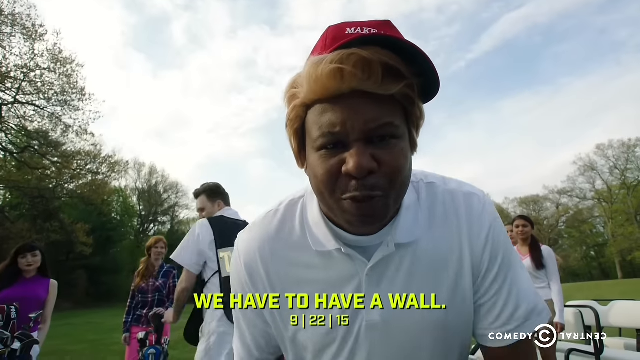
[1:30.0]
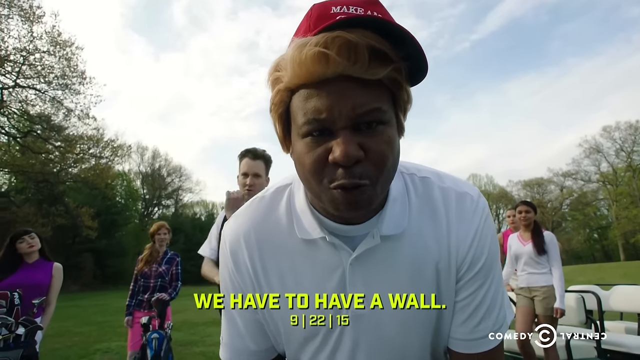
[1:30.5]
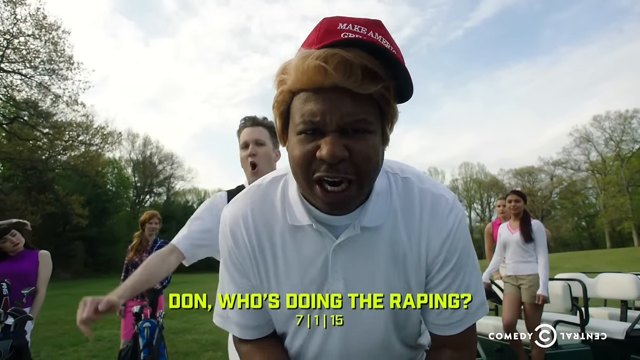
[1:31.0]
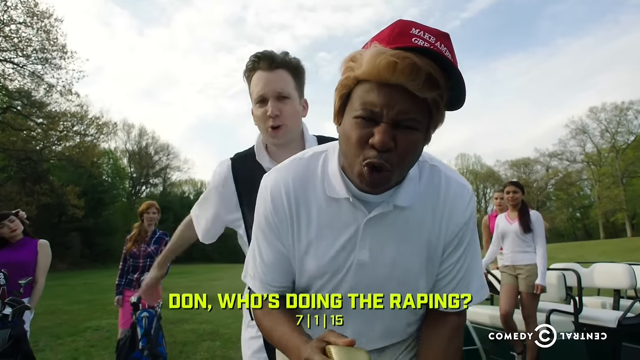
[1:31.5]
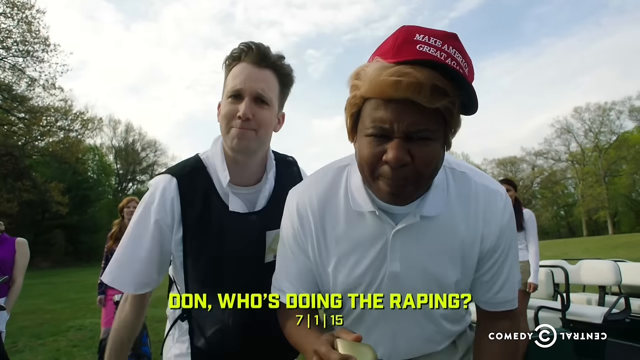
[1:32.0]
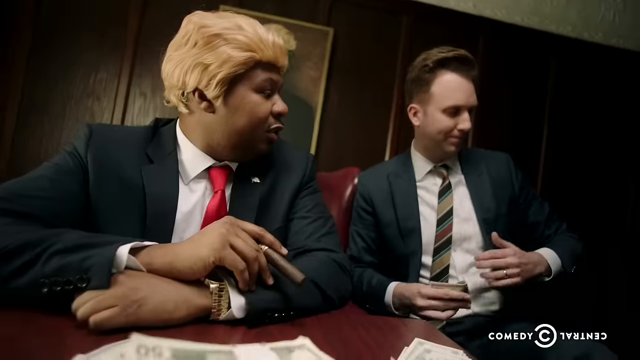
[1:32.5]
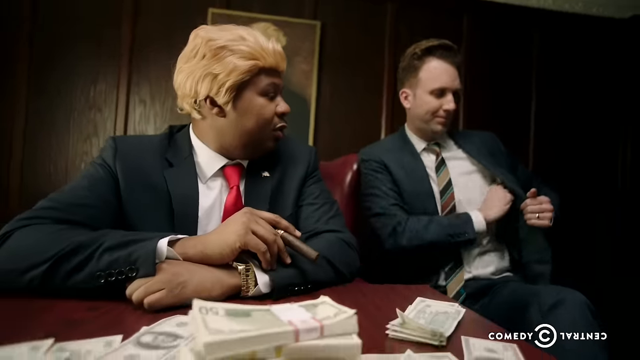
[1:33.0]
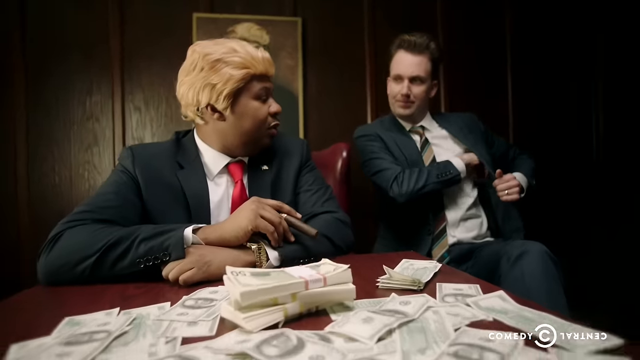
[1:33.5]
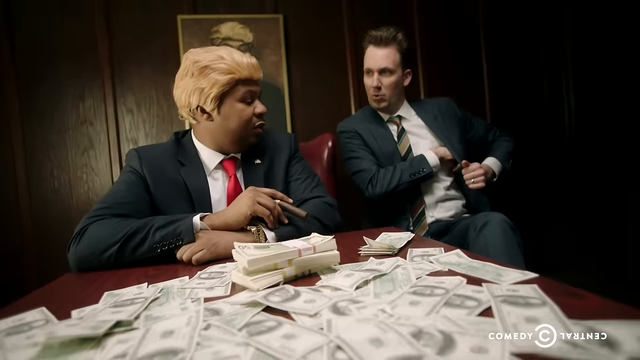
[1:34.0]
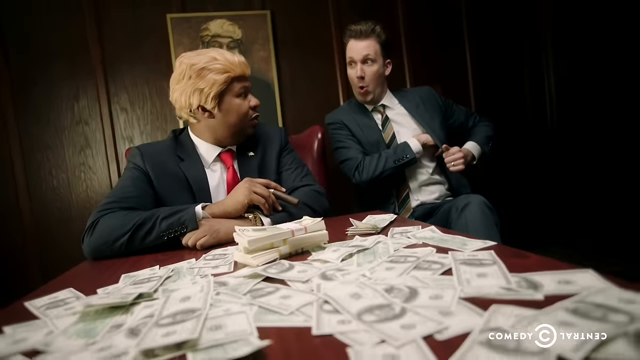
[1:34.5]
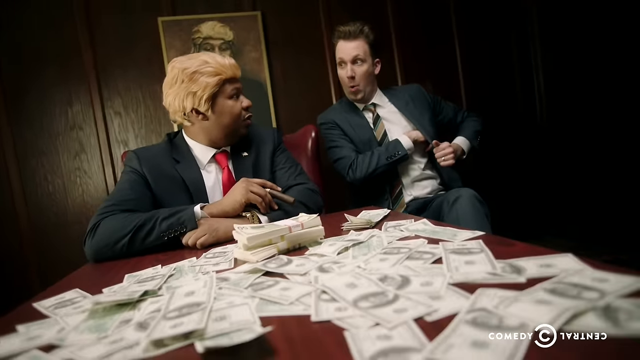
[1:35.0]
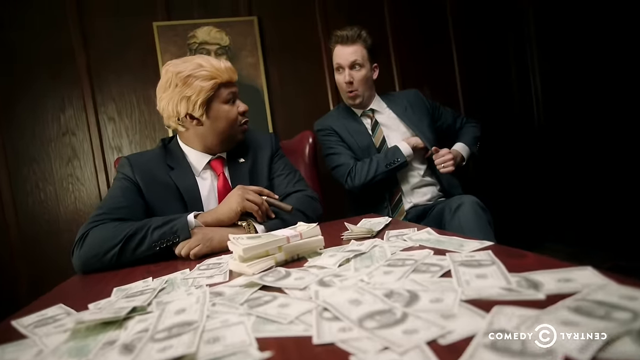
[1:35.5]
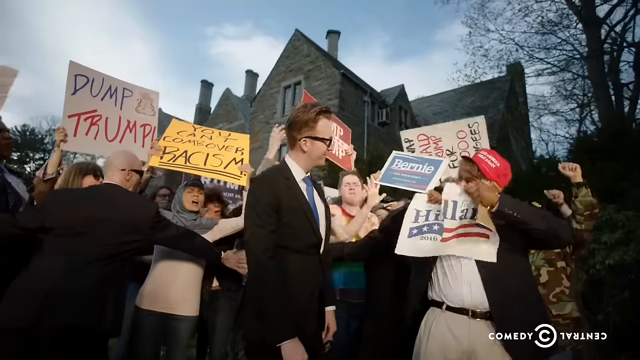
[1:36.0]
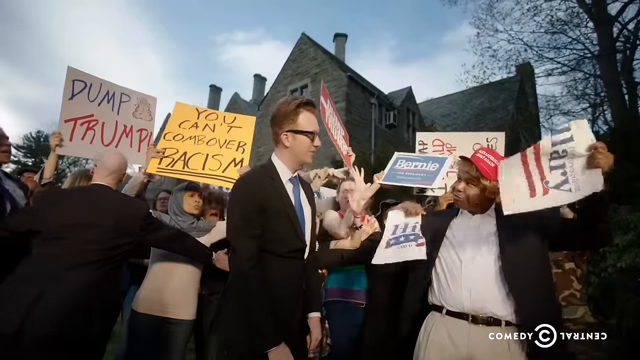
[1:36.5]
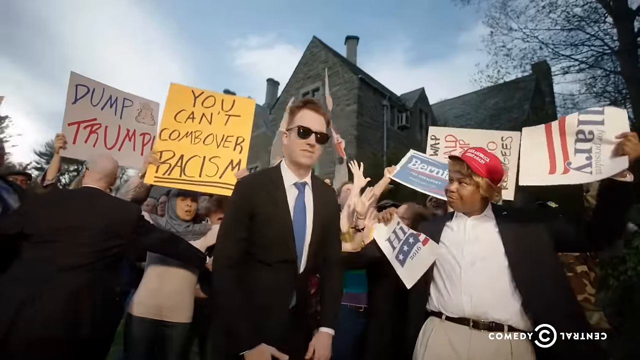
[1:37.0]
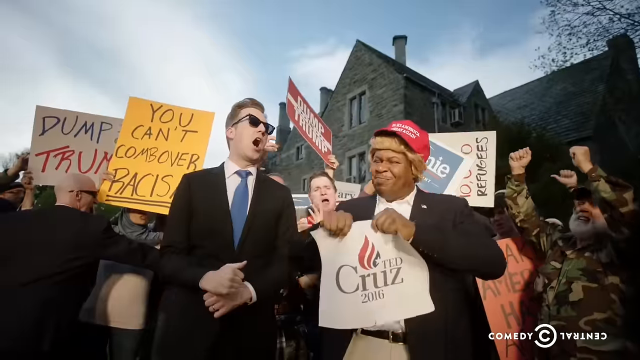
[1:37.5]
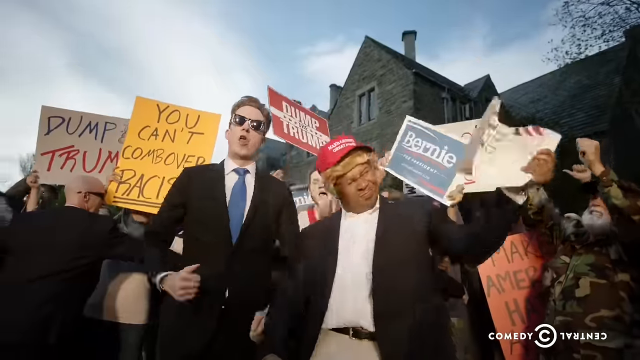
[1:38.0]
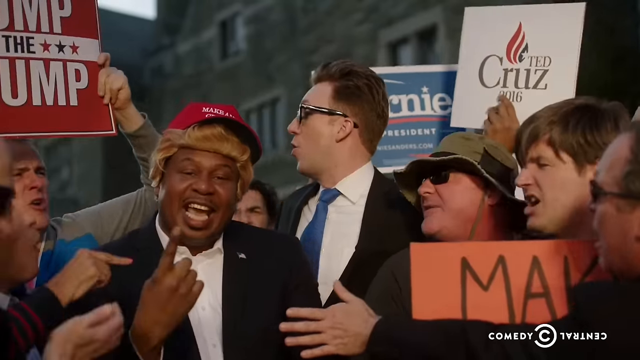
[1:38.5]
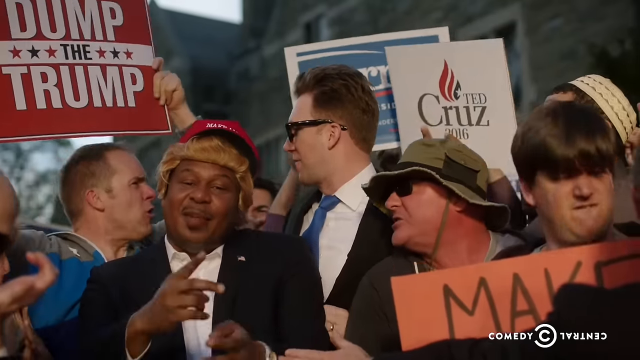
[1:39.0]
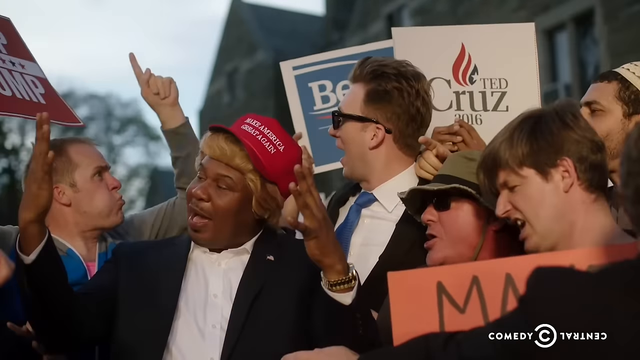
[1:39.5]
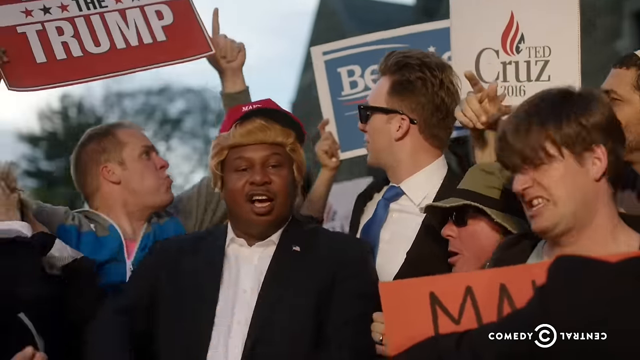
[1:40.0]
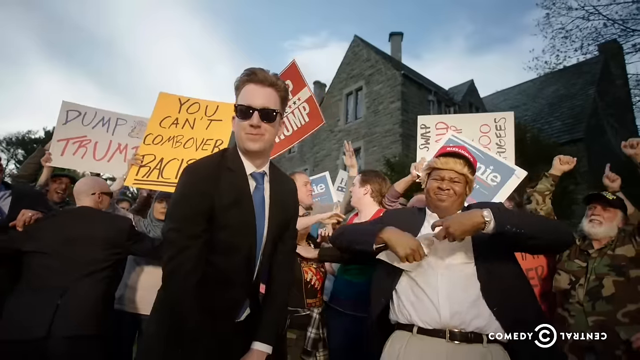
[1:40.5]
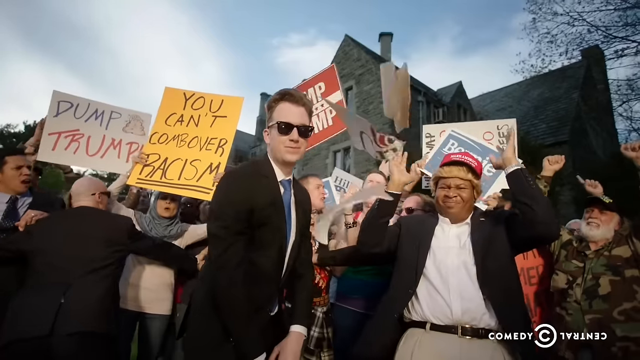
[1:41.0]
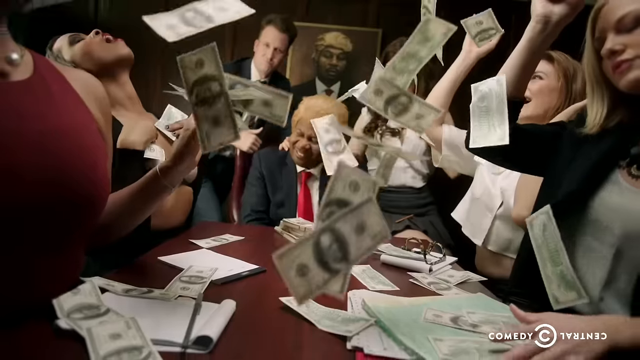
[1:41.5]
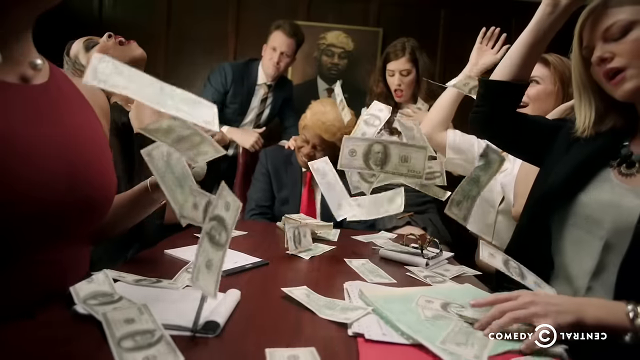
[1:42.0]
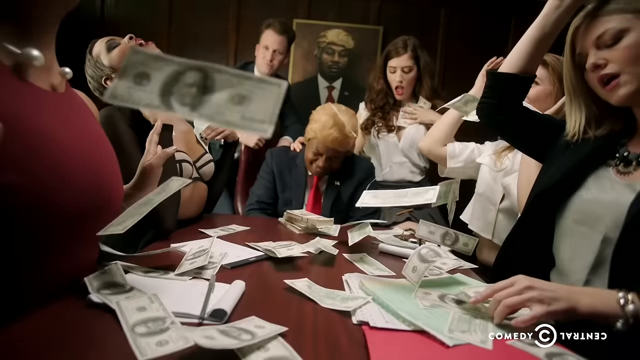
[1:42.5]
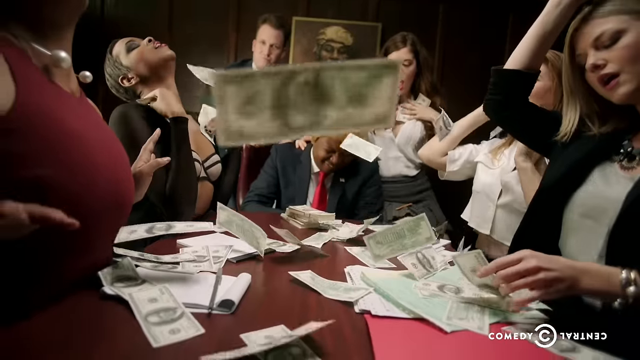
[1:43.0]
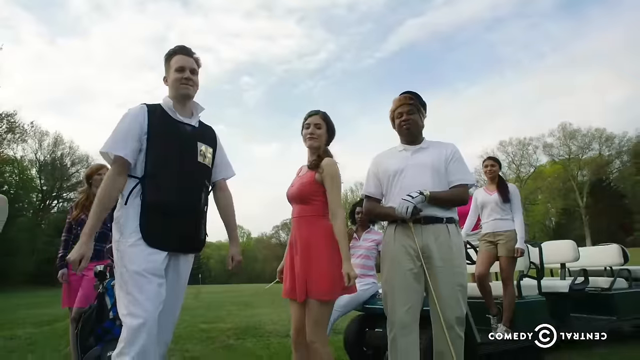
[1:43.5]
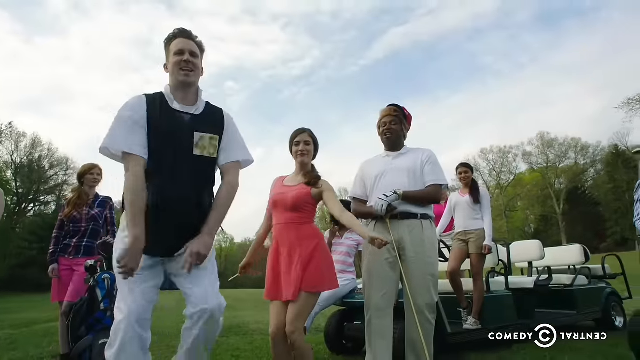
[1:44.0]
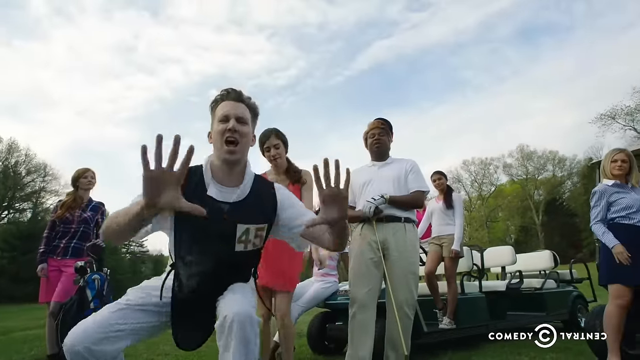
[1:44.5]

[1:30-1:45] Donald Trump appears to have an angry face and appears to continue shouting toward the cameraman. The golf caddy, a white male, appears to be tapping his chest. Several women appear in the background, some wearing shorts and some wearing pants, and a golf cart with several white seats is on the right side. In another scene, the caddy and Black Donald Trump wear professional outfits with suits and ties and appear to be sitting on what appear to be red cherry chairs at a wooden table. Several $50 bills are rolled up in a band, while other bills are spread across the table. Donald Trump is then seen again with the protesters, who are holding more signs, and he rips a Hillary Clinton supporter sign in half several times and throws the pieces in the air. In the last scene, several women are around Donald Trump as he sits at the table, and the women throw money in the air so that it floats and flies across the room.